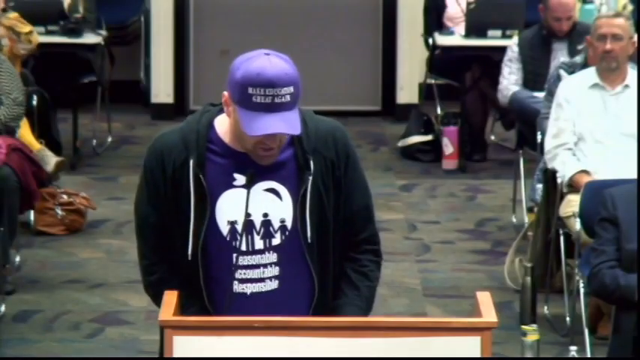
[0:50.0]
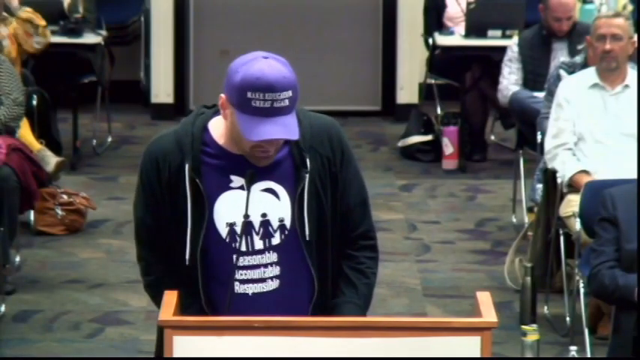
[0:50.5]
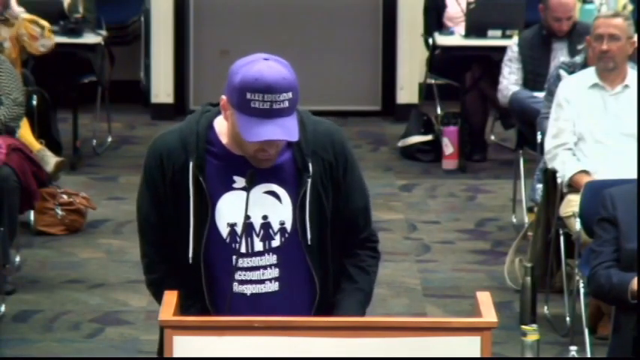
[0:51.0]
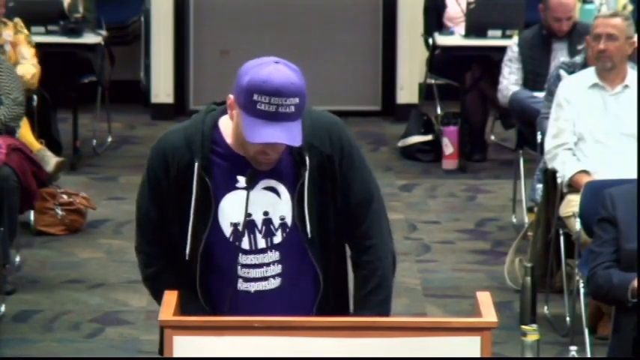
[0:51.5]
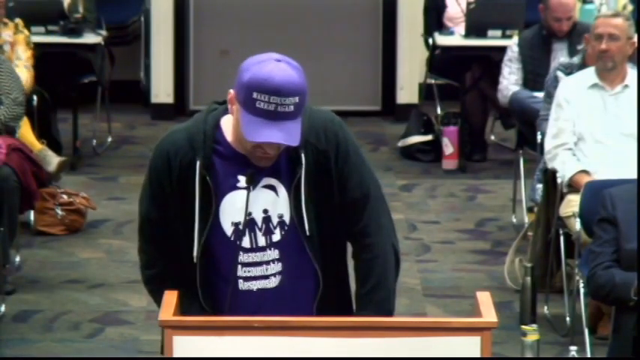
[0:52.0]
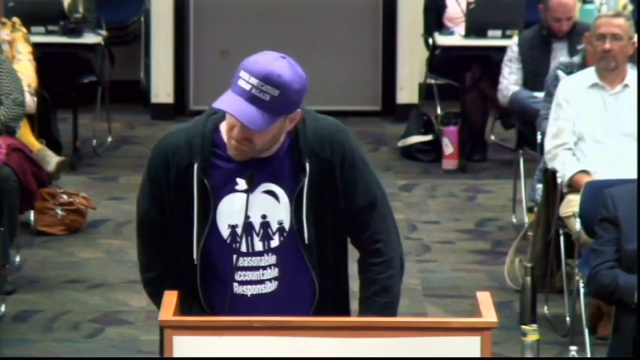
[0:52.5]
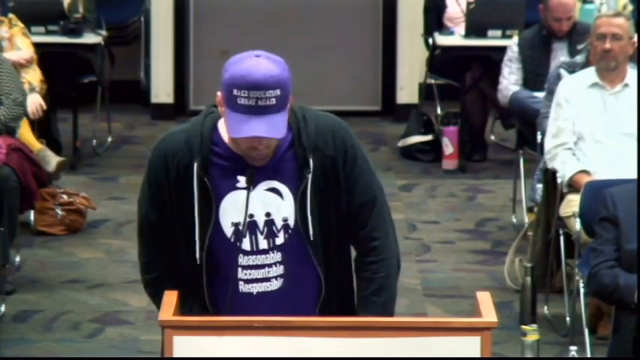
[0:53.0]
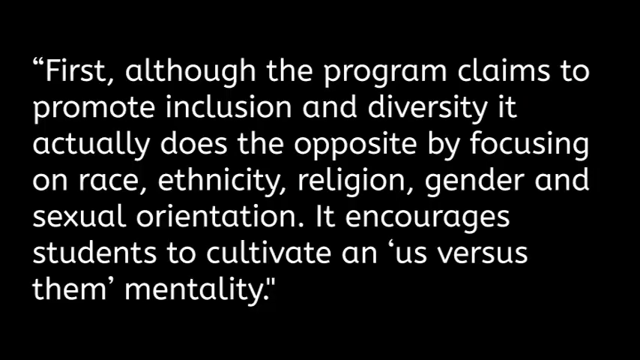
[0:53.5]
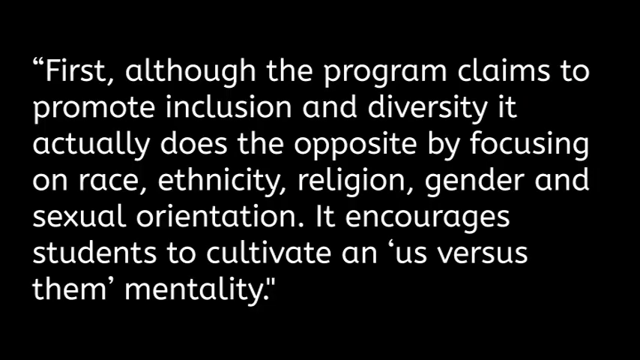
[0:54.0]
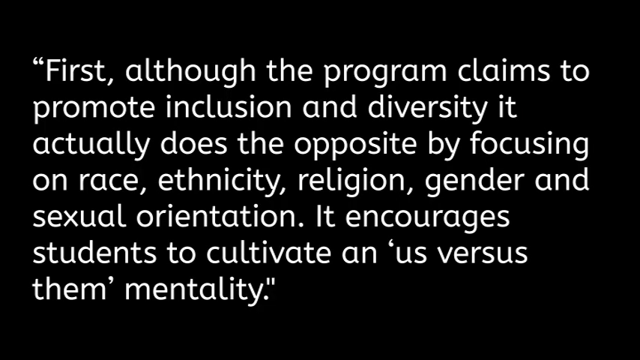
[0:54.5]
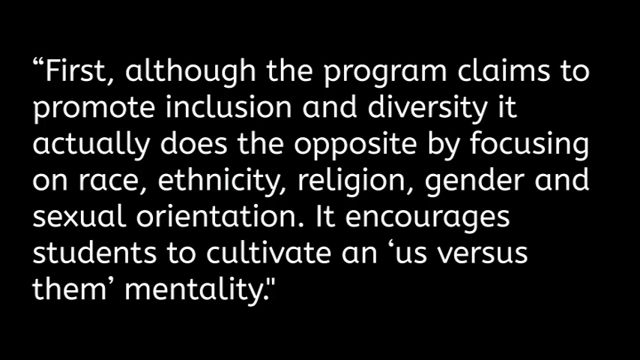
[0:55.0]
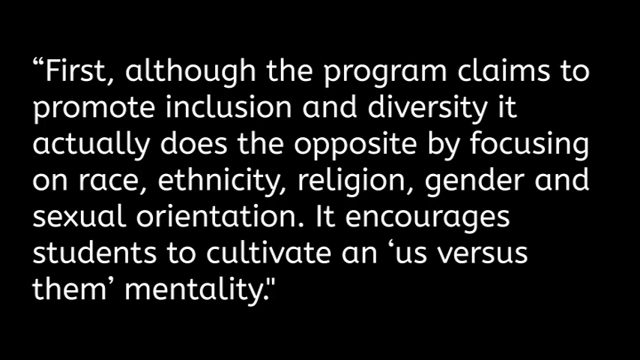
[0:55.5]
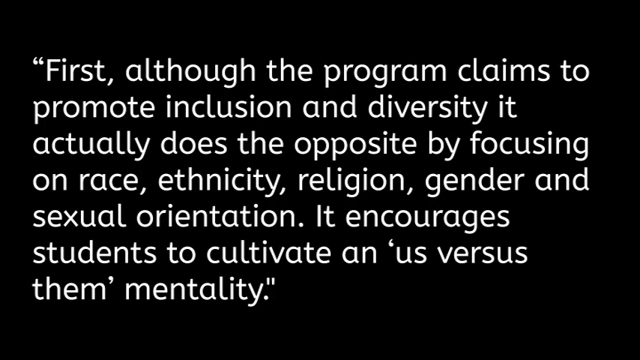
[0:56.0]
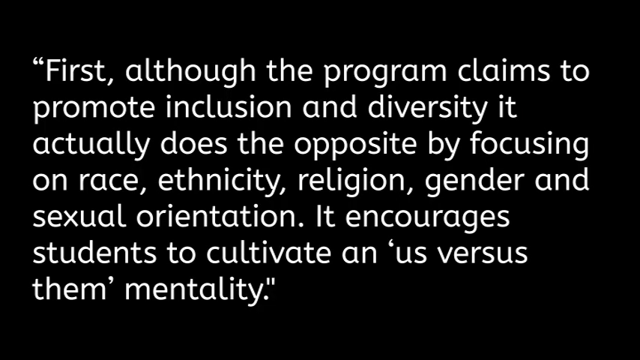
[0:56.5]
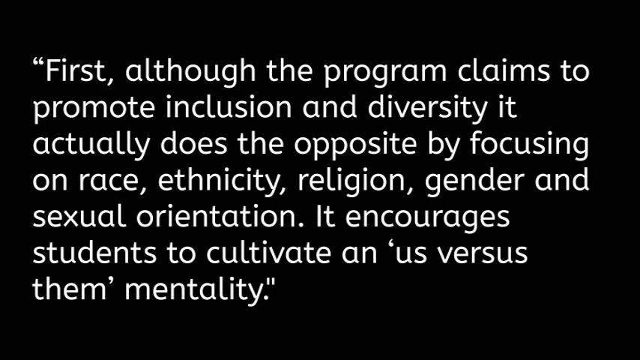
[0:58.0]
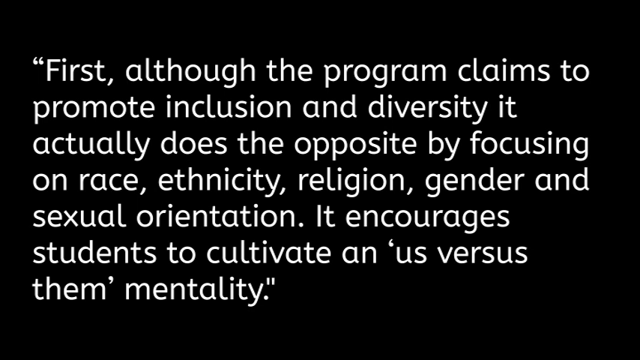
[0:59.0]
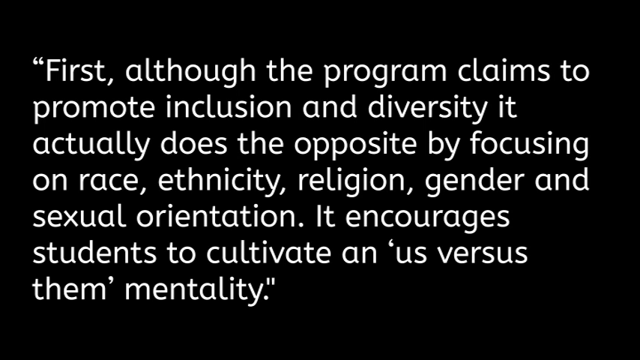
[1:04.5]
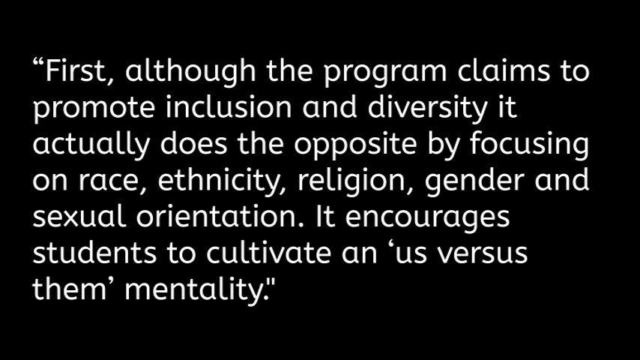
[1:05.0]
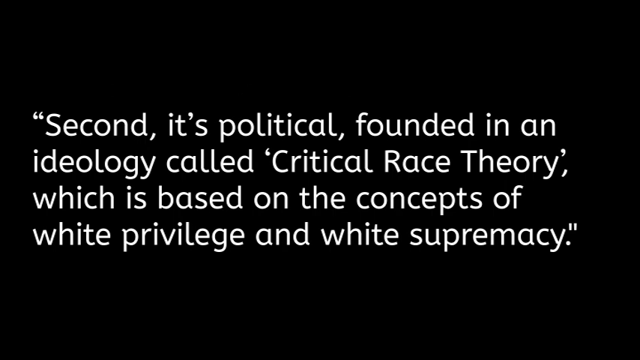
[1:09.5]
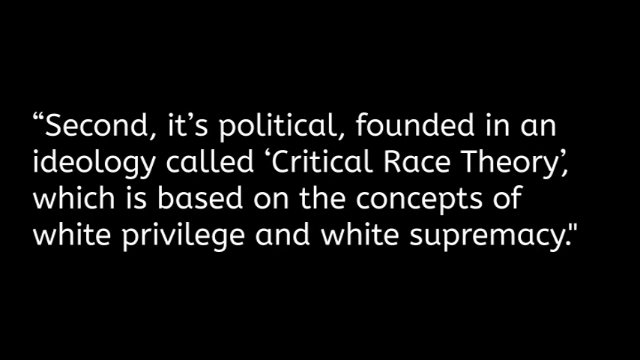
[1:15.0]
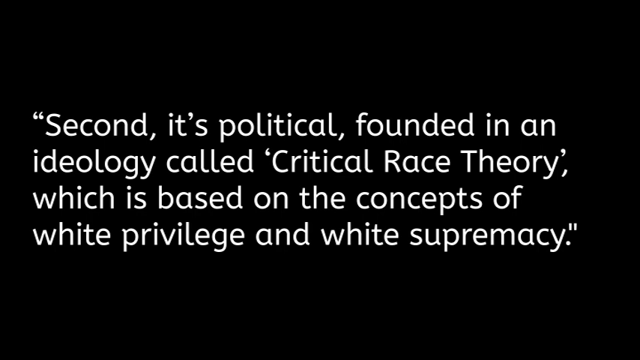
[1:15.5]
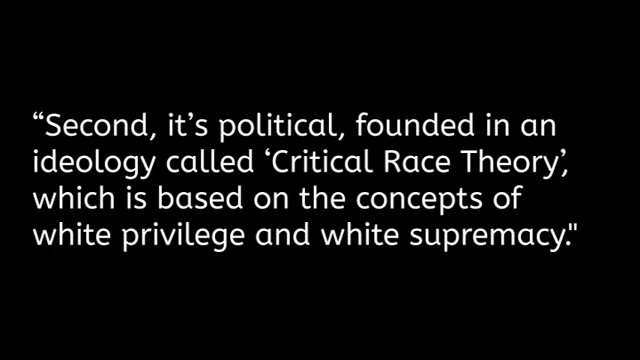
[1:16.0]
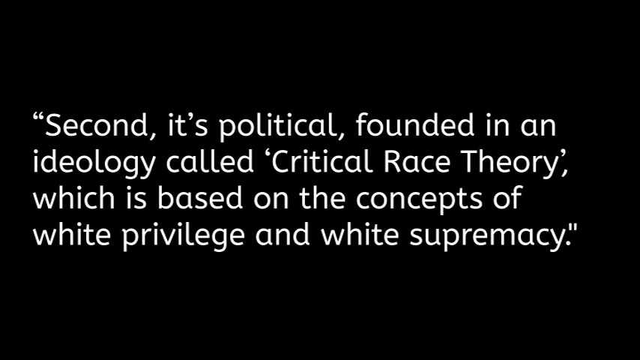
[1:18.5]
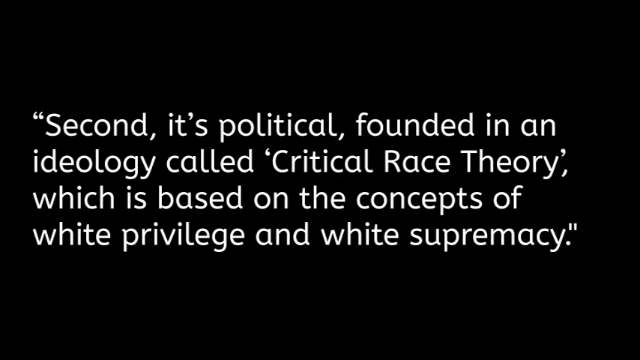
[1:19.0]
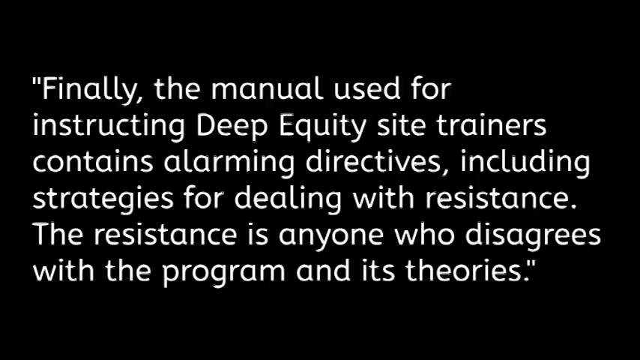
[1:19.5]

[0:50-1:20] A man is talking. He says "it actually does the opposite by focusing on race, ethnicity, religion, gender and sexual orientation. It encourages students to cultivate an us versus them mentality," and then that it is founded in "an ideology called critical race theory, which is based on the concepts of white privilege and white supremacy." After this, the video goes back to the man again; he seems not very happy. Other people are in the room with him: two men sit on the right side of the screen and some people sit on the left side. The man wears a purple shirt with white printing, a purple hat with white printing, and a black hoodie with white ties.